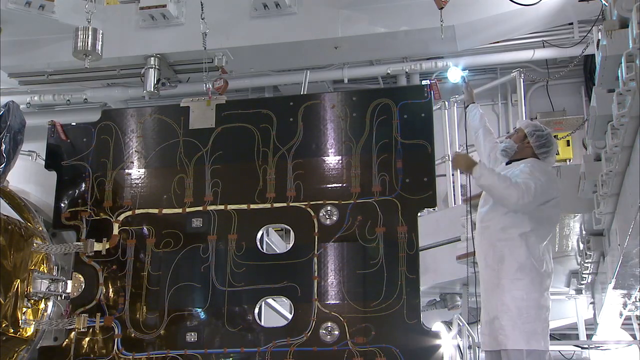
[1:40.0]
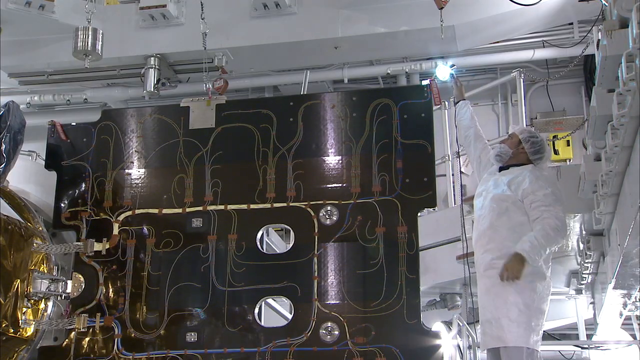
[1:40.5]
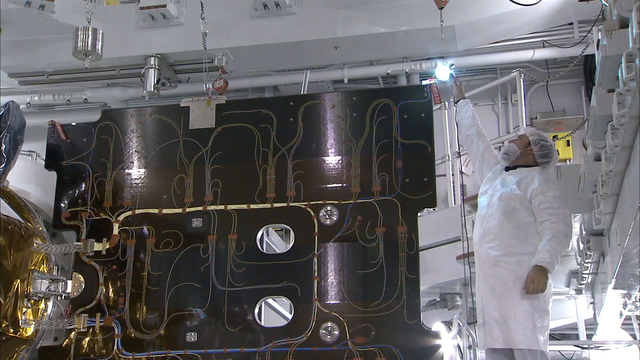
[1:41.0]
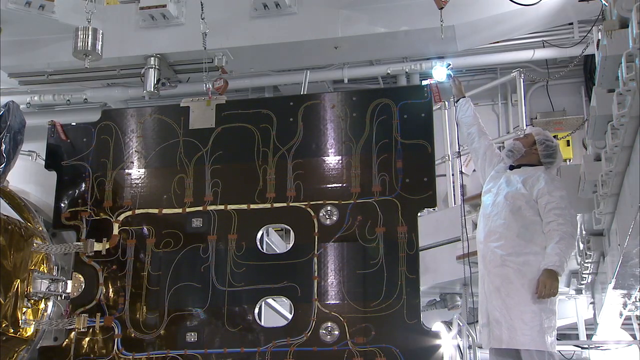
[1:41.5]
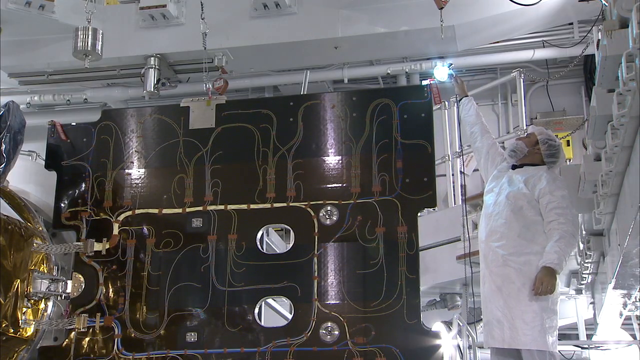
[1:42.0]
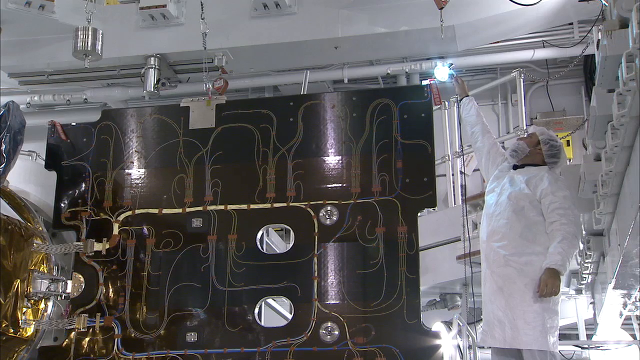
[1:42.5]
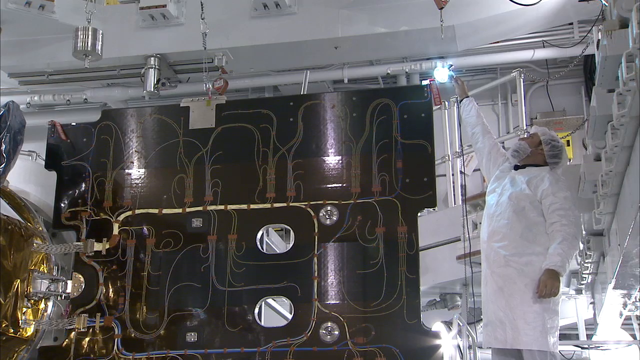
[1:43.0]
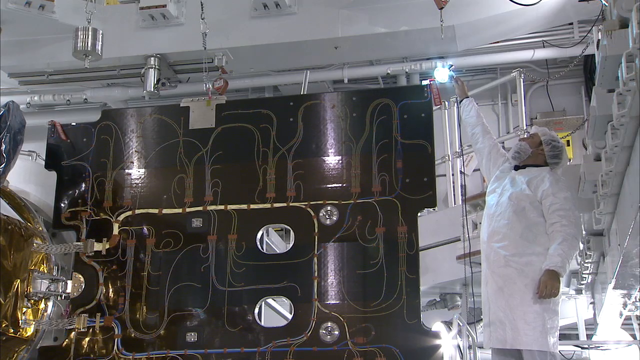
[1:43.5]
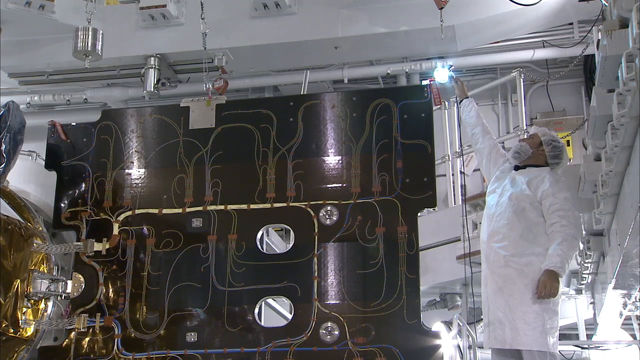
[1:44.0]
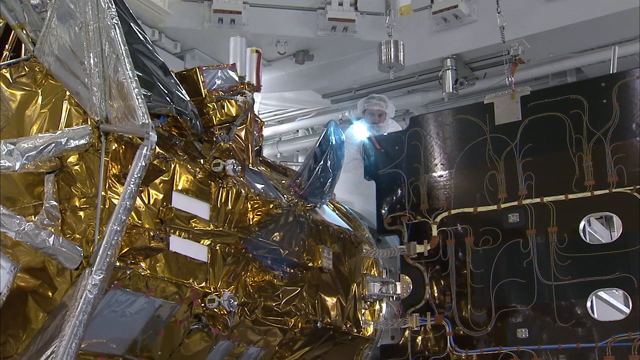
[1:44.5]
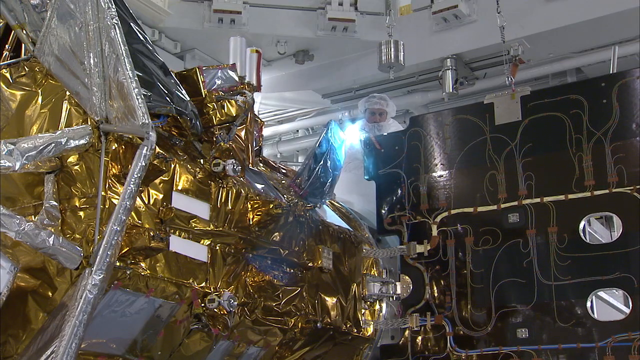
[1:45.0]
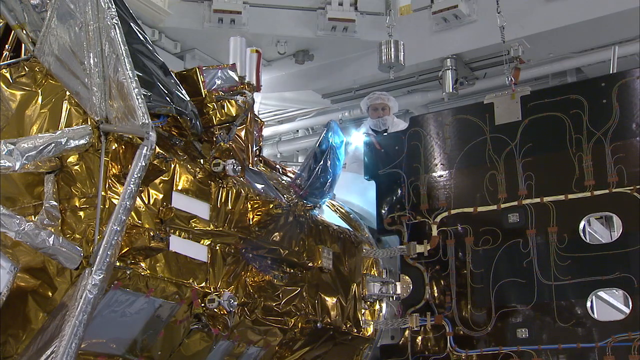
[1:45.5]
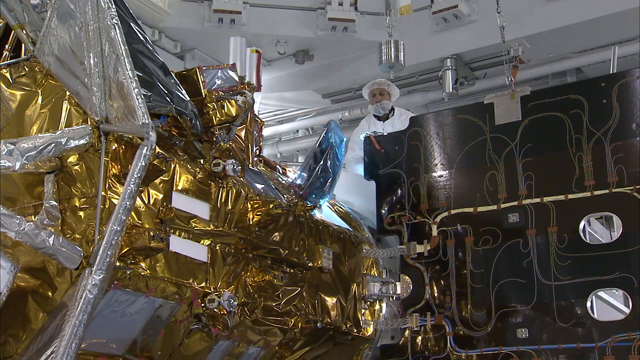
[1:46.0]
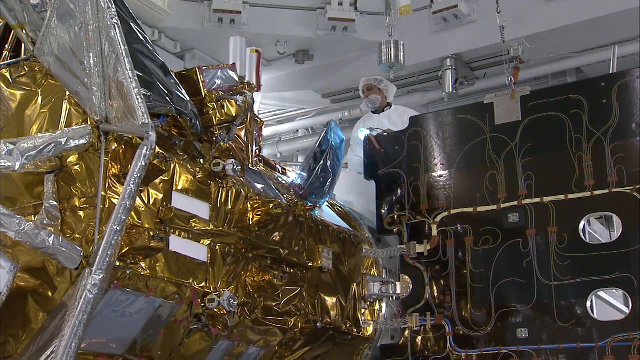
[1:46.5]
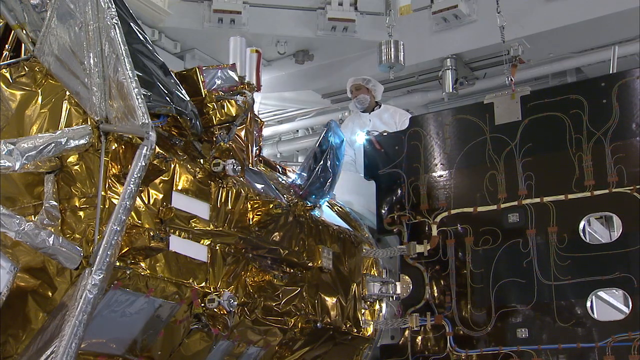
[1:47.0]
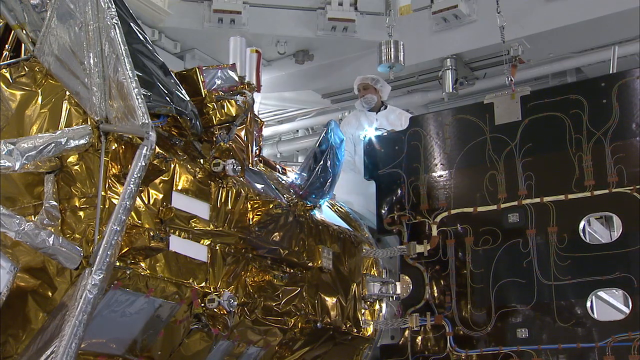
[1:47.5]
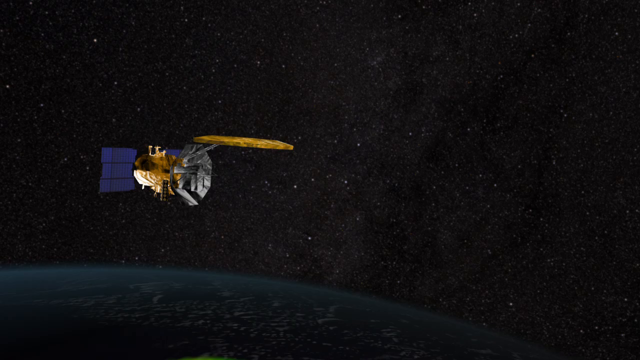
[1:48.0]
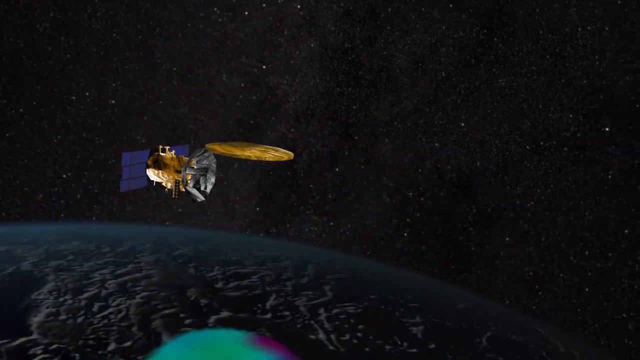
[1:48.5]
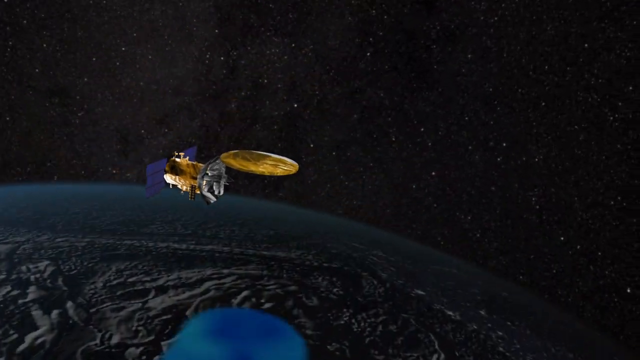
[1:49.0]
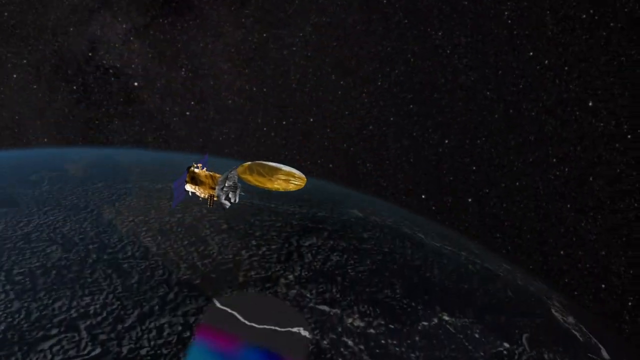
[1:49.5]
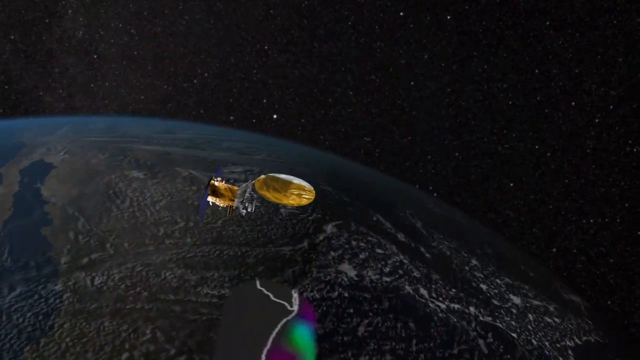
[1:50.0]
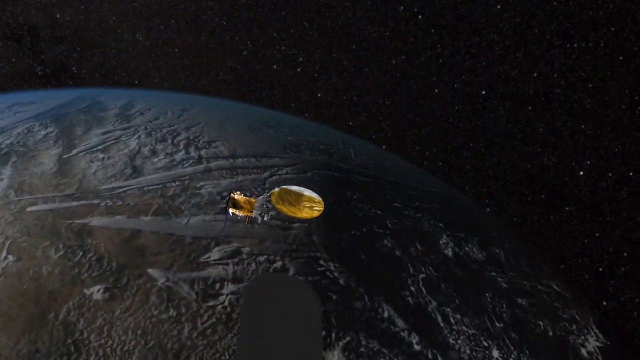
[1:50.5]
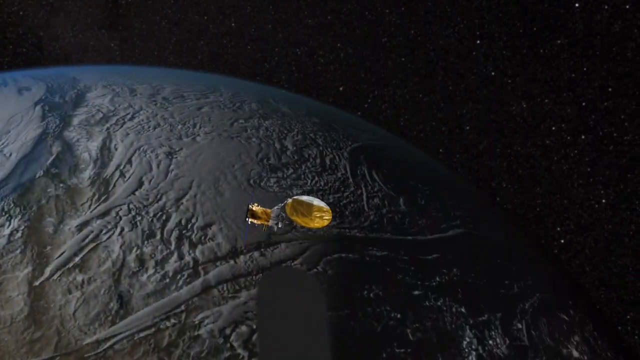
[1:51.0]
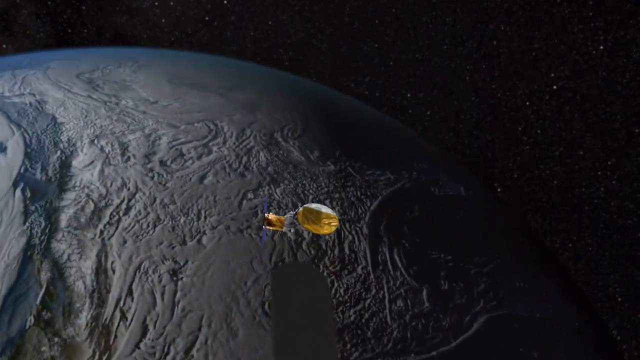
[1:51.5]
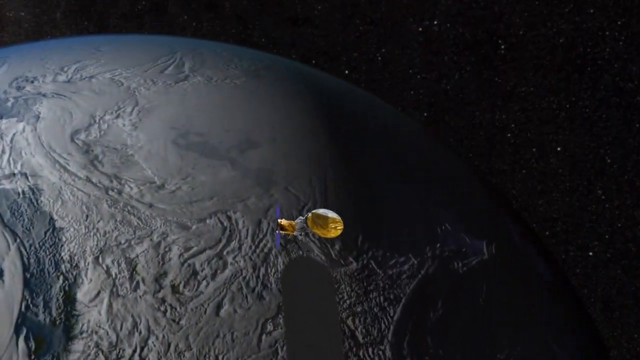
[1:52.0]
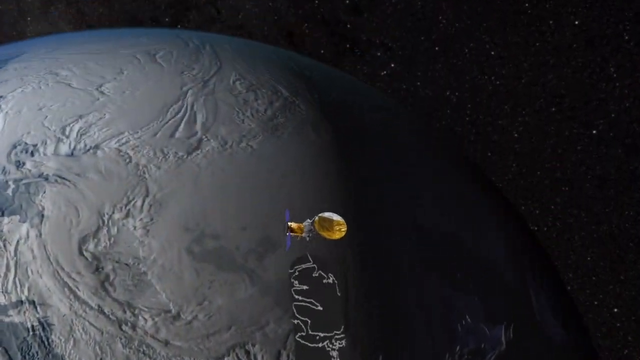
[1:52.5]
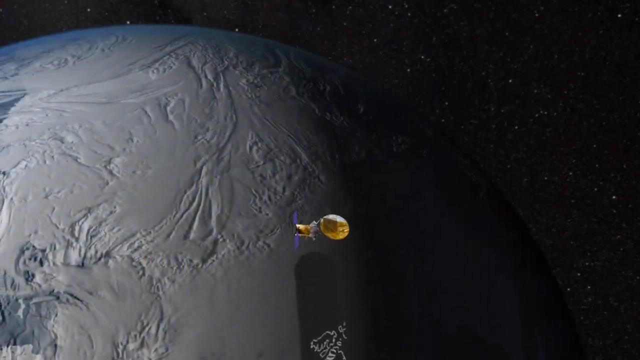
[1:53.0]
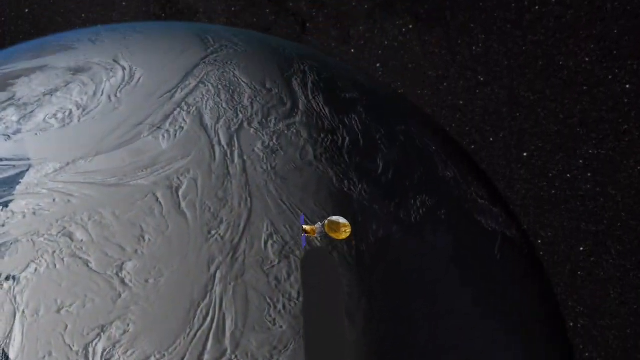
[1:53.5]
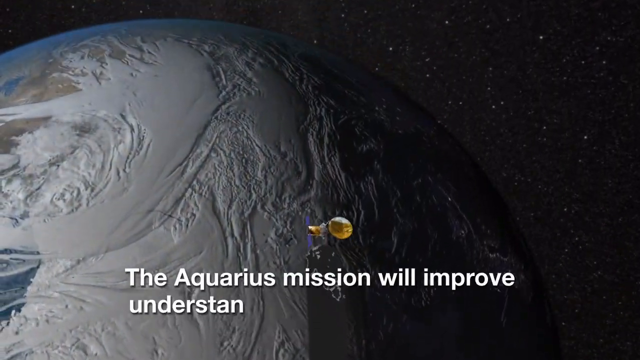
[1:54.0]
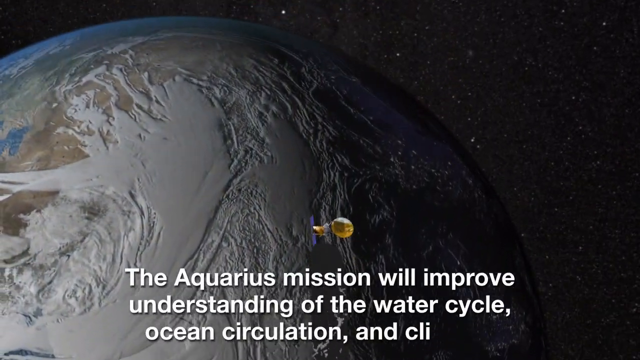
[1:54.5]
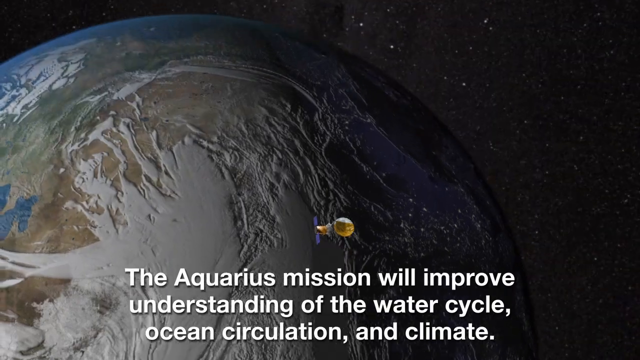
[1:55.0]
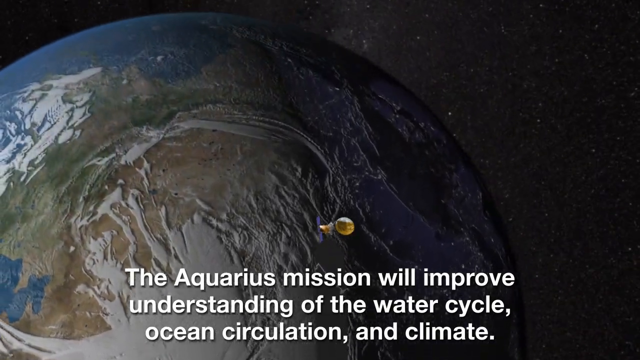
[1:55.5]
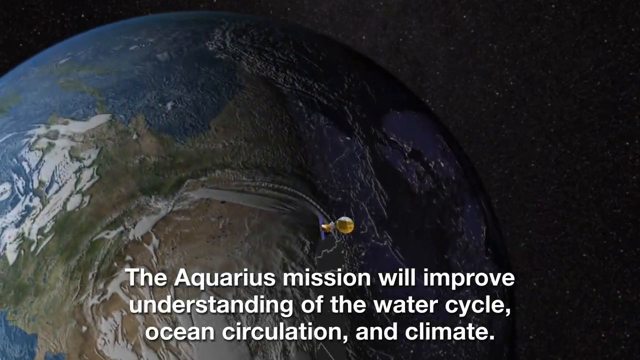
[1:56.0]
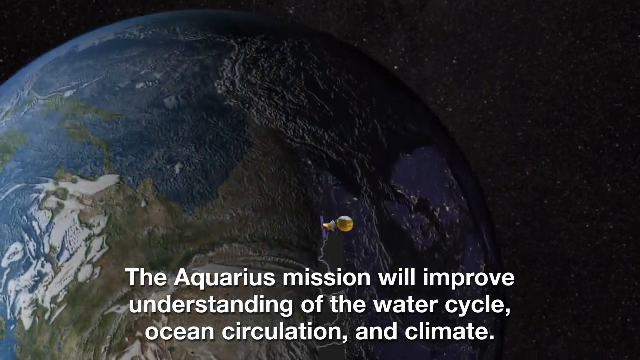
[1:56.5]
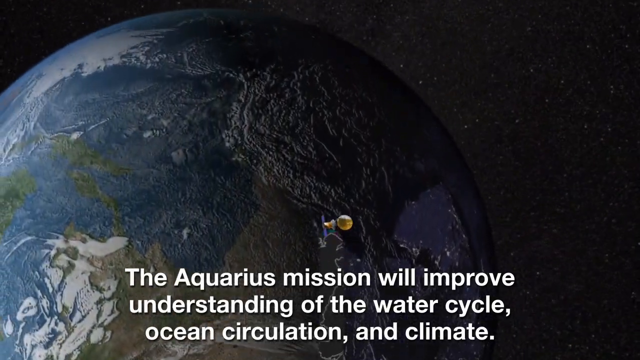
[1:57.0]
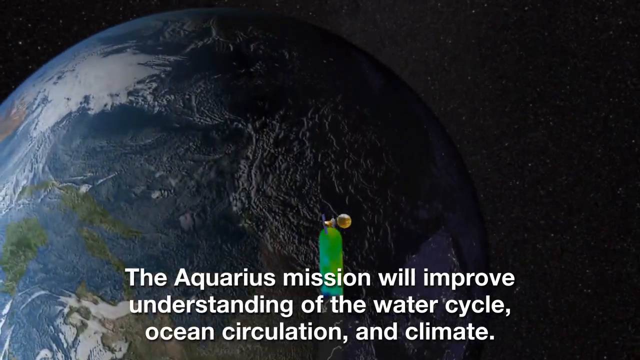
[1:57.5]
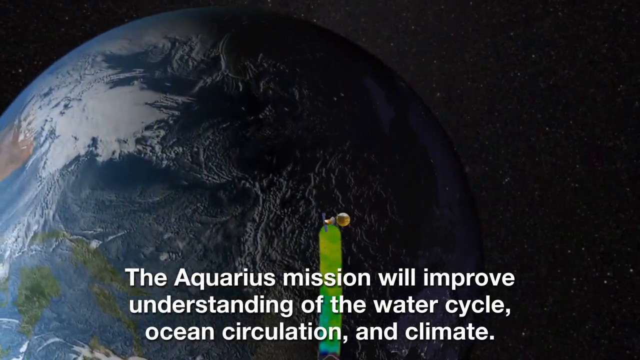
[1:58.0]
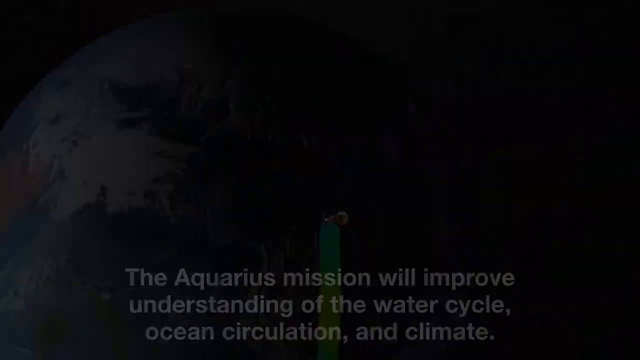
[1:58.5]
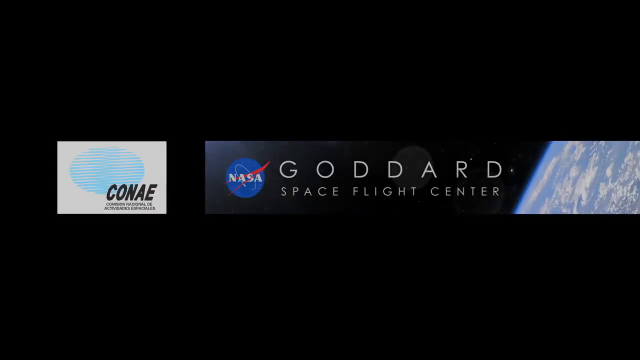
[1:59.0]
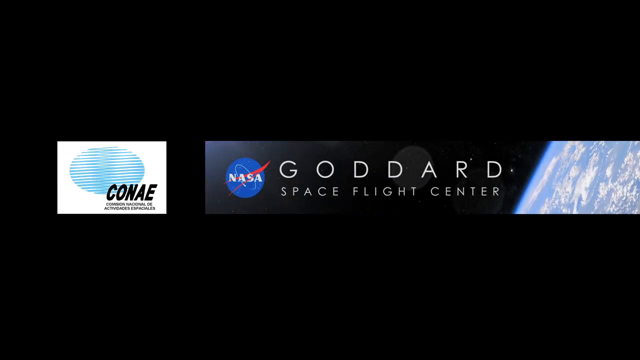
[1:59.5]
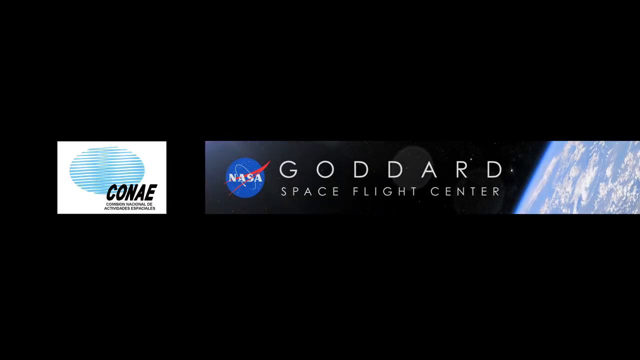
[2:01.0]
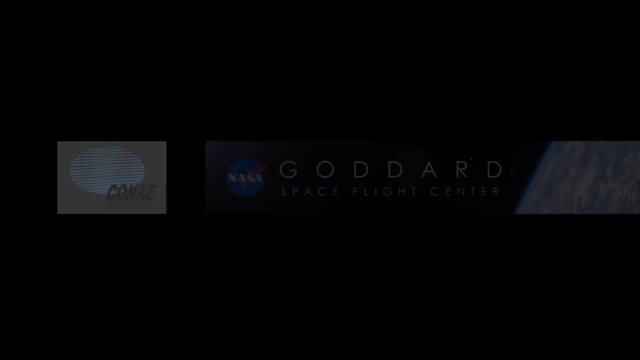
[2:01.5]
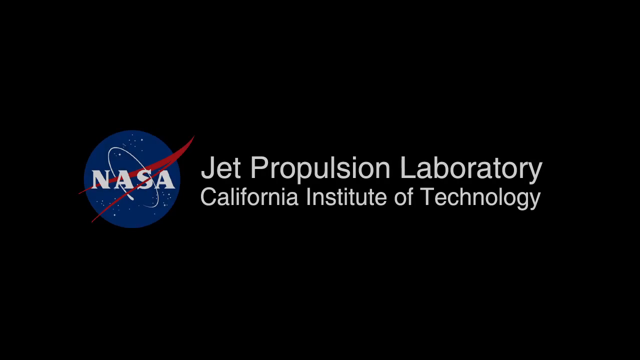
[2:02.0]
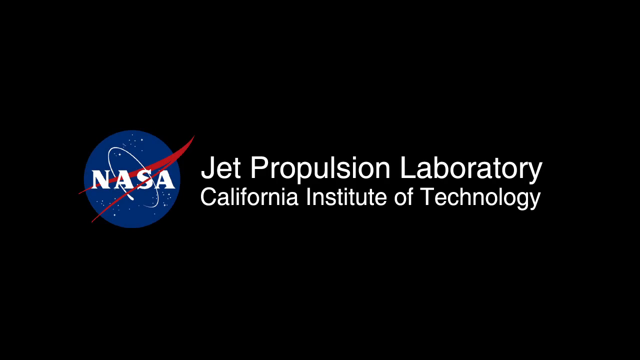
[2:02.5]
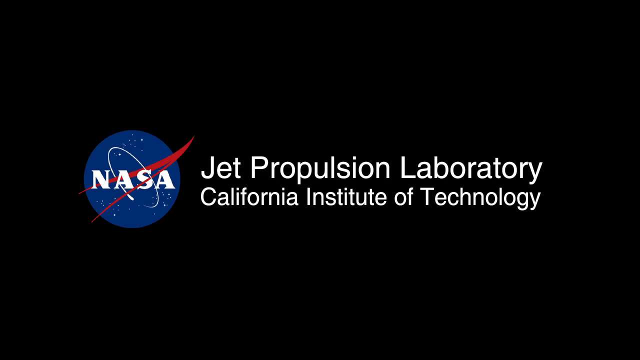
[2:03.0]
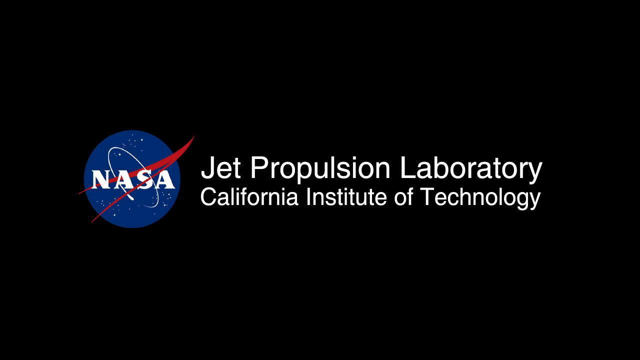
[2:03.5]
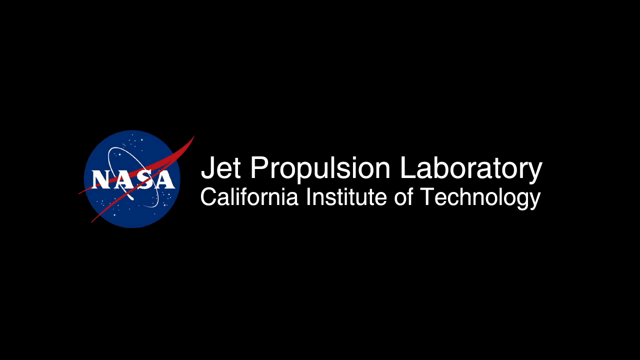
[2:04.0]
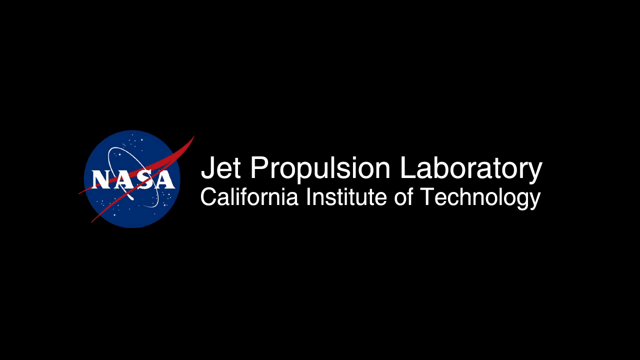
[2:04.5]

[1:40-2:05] Someone wearing a white lab coat, a hairnet and a mask over their mouth holds a light up to a certain area, seemingly trying to look at it. The setting looks to be some sort of warehouse and is all white. A black panel in front of the person appears to have some wires, and some light is hitting it; the person looks to be trying to look over the edge of this panel. Behind it is some sort of equipment or machinery covered in gold-looking shiny paper, with what almost seems to be clear wrapping around certain areas. The video then shows what looks to be some sort of craft hovering over the image of a world; the world cycles through as the craft continues to go around. Text at the bottom of the screen reads "The Aquarius mission will improve understanding of the water cycle, ocean circulation and climate."